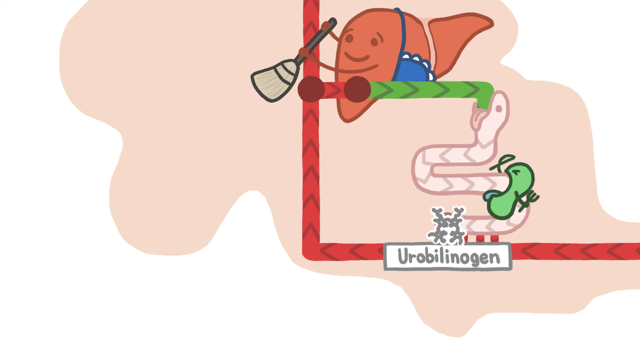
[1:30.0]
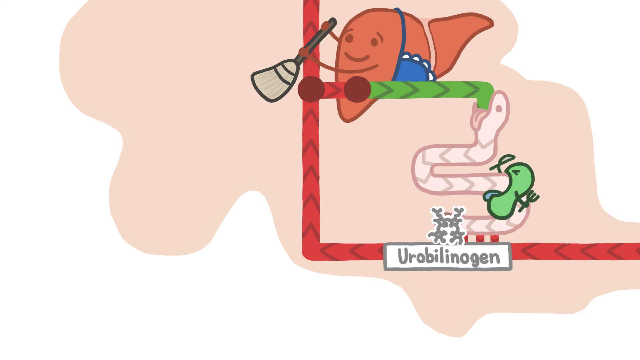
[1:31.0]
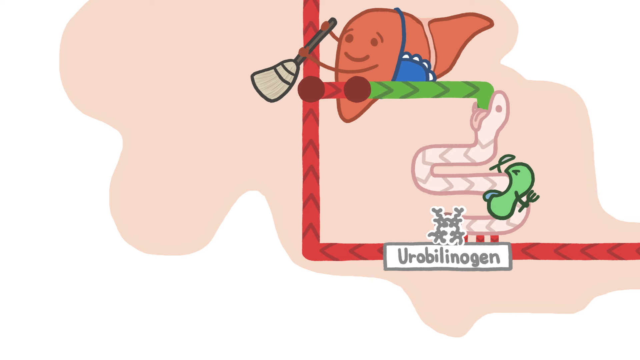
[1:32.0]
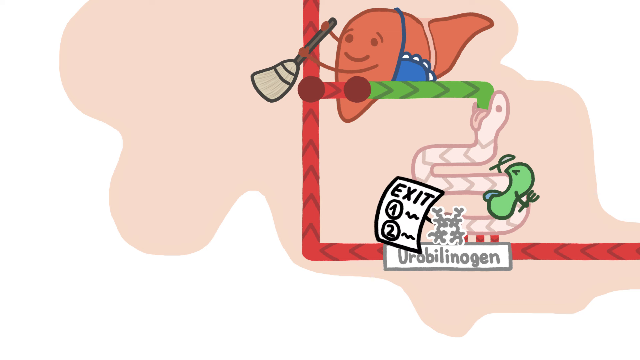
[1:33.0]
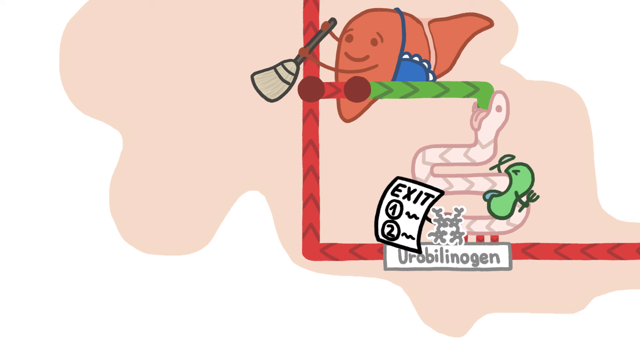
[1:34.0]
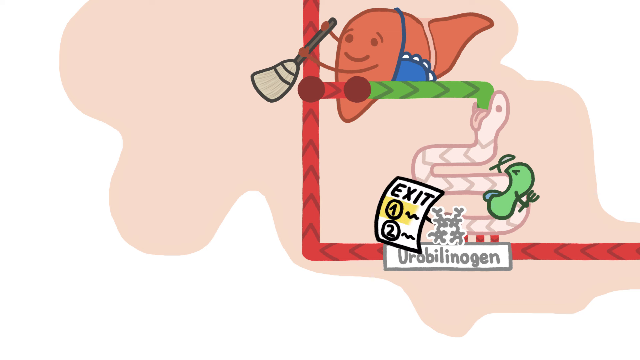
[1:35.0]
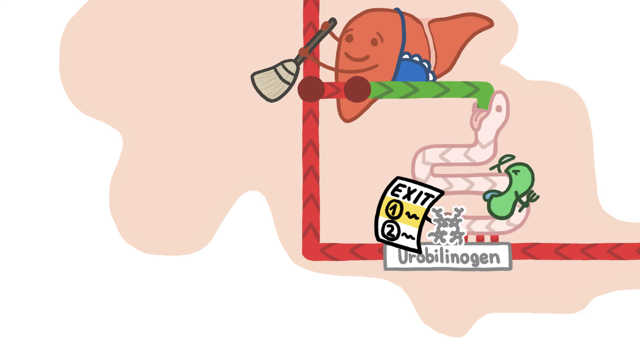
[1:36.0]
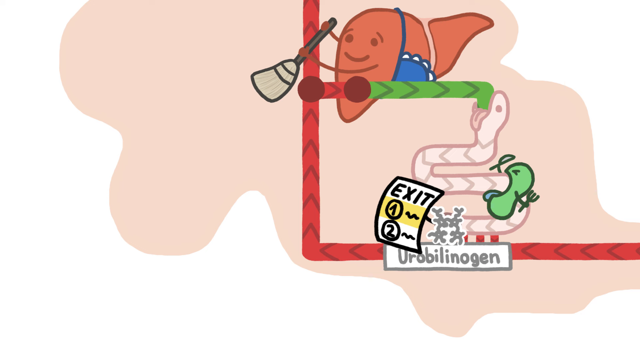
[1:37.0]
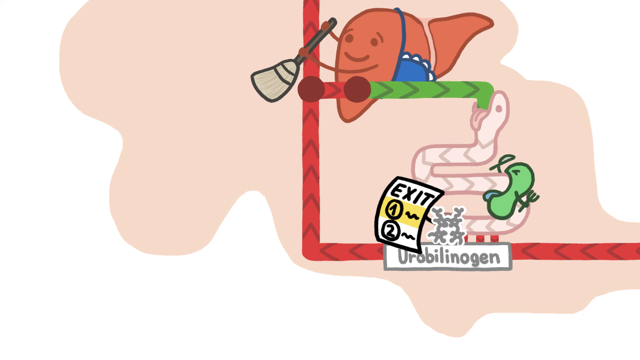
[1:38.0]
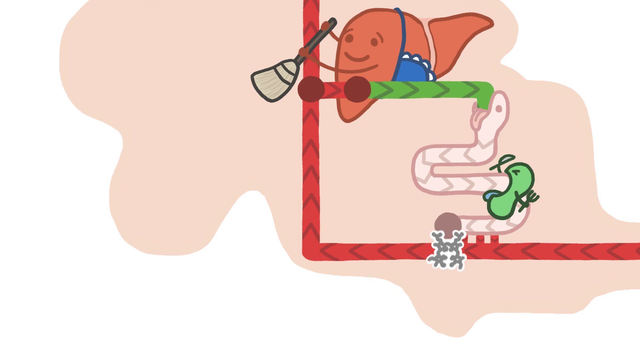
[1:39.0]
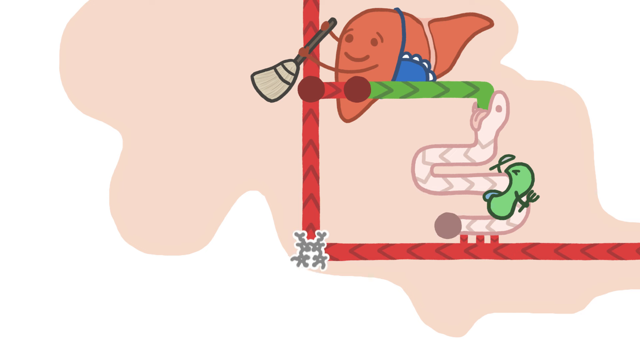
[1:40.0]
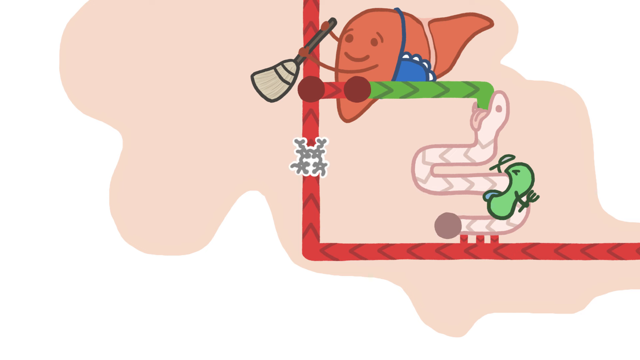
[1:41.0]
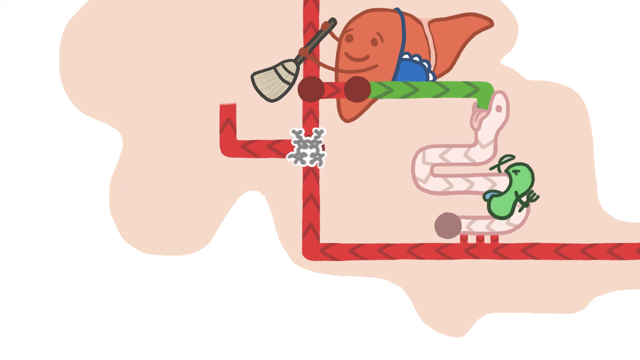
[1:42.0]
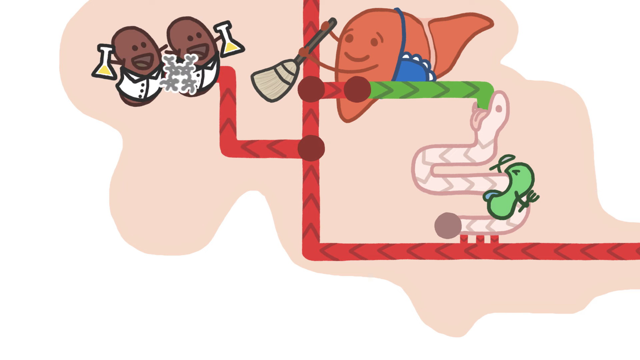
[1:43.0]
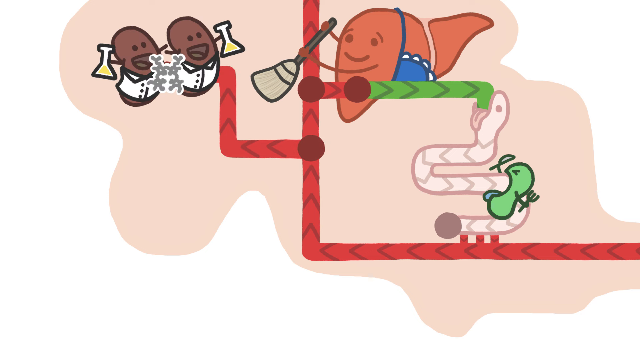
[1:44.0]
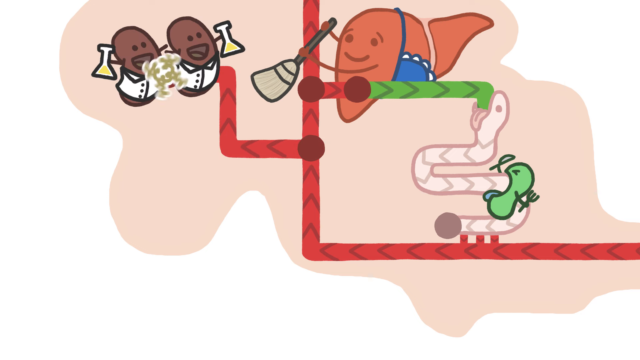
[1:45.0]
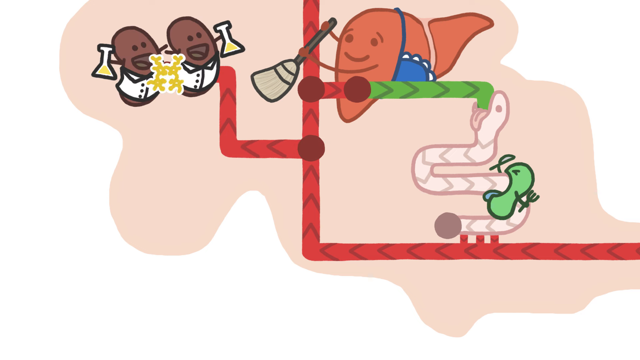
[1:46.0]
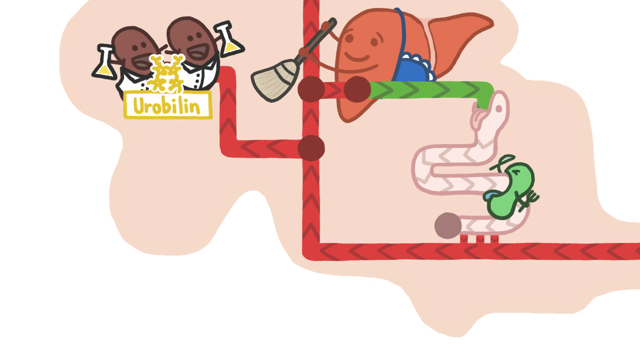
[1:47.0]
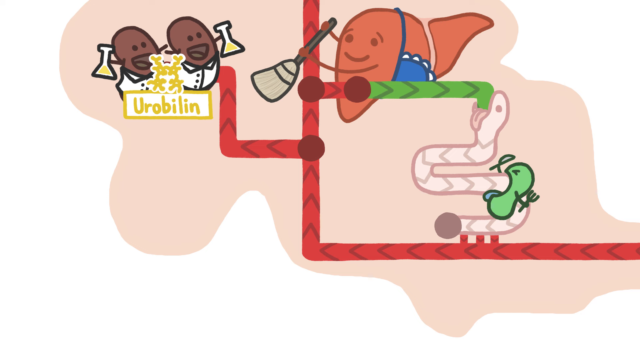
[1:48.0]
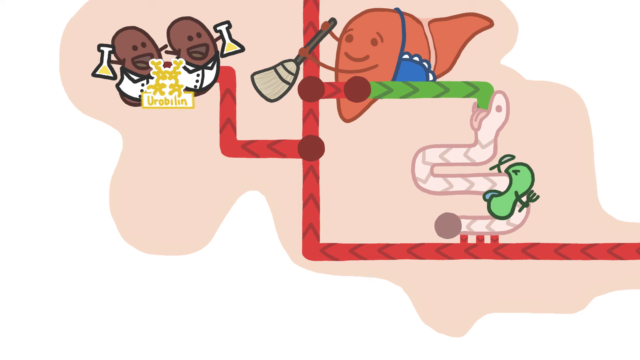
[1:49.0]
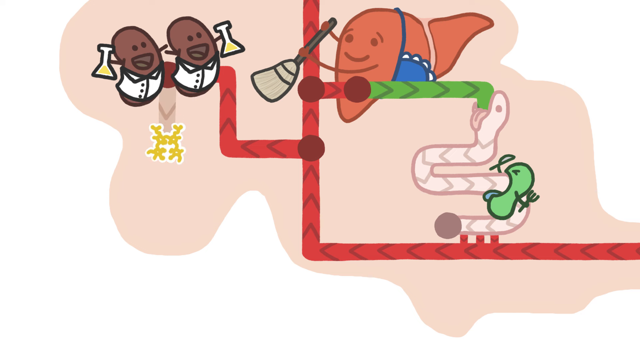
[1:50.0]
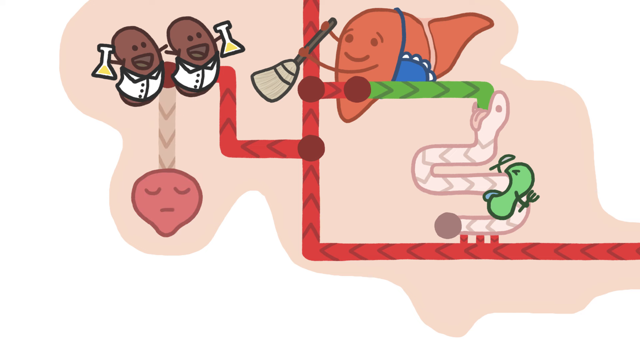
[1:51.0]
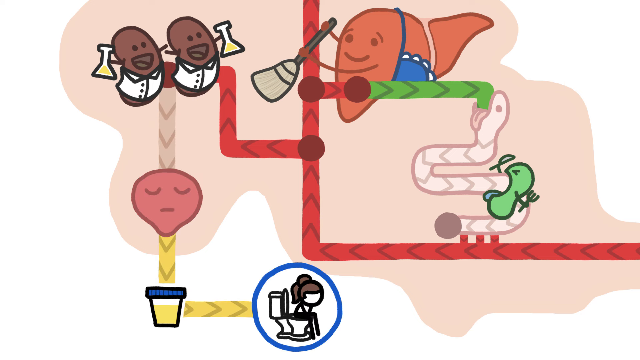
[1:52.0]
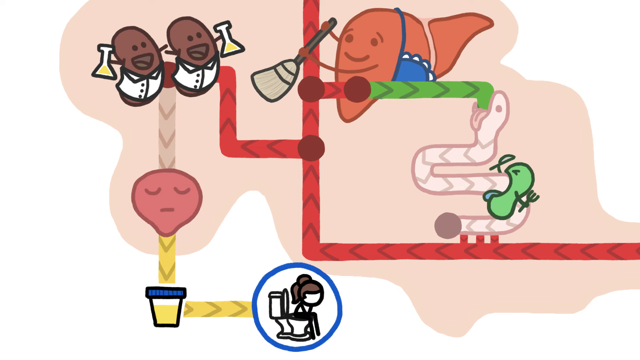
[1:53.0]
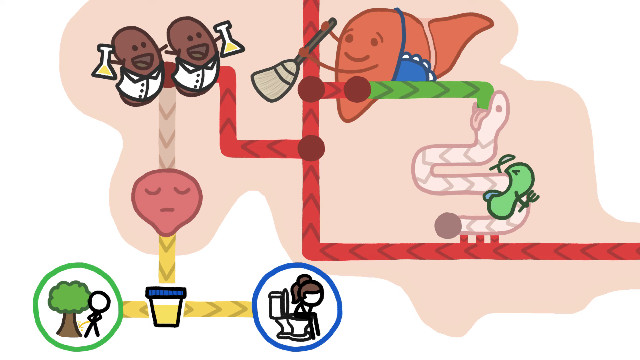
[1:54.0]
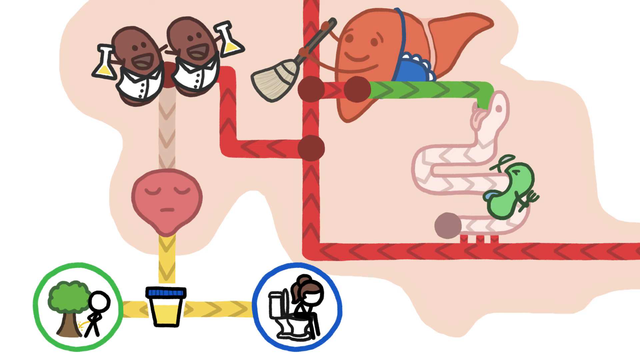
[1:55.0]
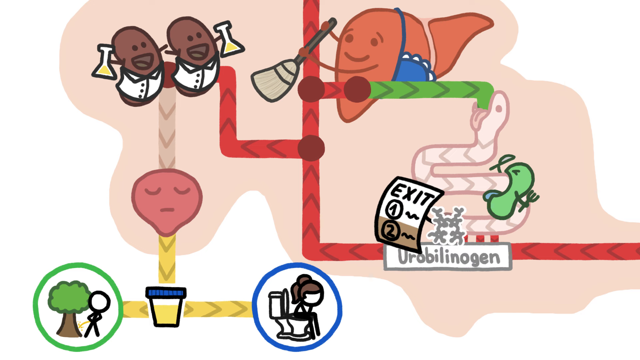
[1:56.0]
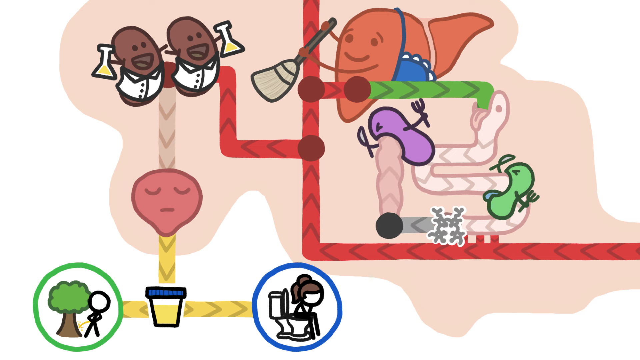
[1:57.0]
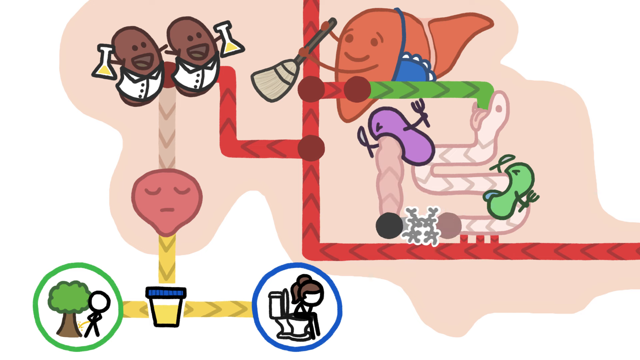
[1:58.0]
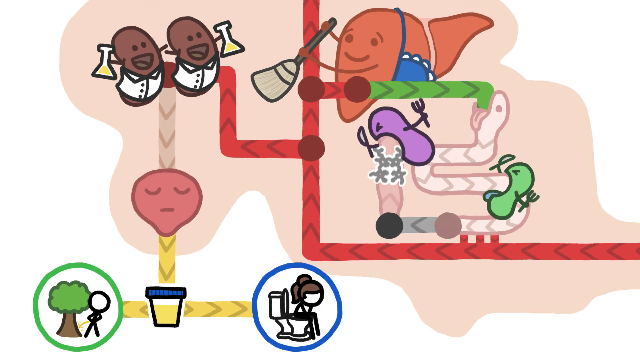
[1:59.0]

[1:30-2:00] Below the "Eurobilinogen" label, a memo comes up with the word "exit" written on it and two numbered bullet points beneath, shown as squiggly lines that look like writing but cannot be read; one is highlighted in yellow. The memo disappears, and the DNA goes up the line again, but this time veers off to the left before reaching the broom. It heads left, up and left again towards two little brown things that look like brown peanuts, both wearing white shirts and holding test tubes with yellow liquid. The DNA spins round, turns yellow again, and the text says "Eurobilin". That label disappears, and the DNA heads down another line, now brown, towards a red head with its eyes closed. From the red head the line turns yellow and a urine testing pot appears. To the left, a line ejects from it towards a blue circle showing a stick figure with brown hair sitting on a toilet; to the right of that is a green circle with a tree and a stick figure standing next to it. The exit memo highlights again and disappears. Above where the memo was there is now something like a purple peanut with a knife and fork in its hand, which looks like it is vomiting downwards. The DNA heads up towards the vomiting purple peanut, goes into its mouth and disappears.